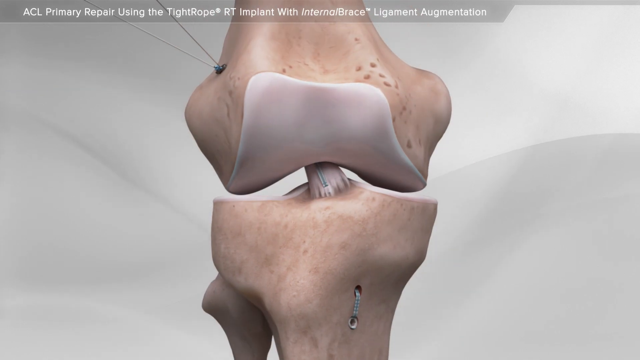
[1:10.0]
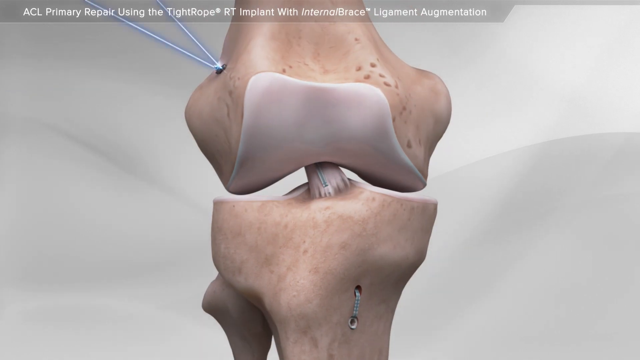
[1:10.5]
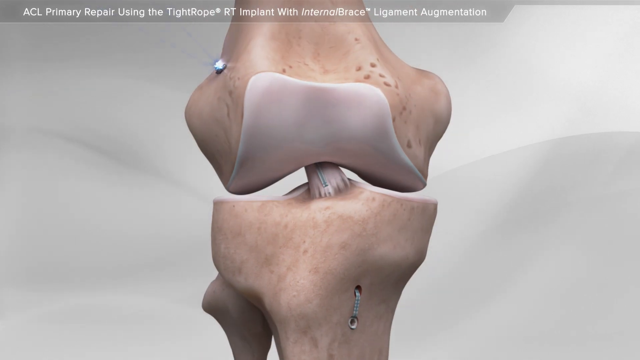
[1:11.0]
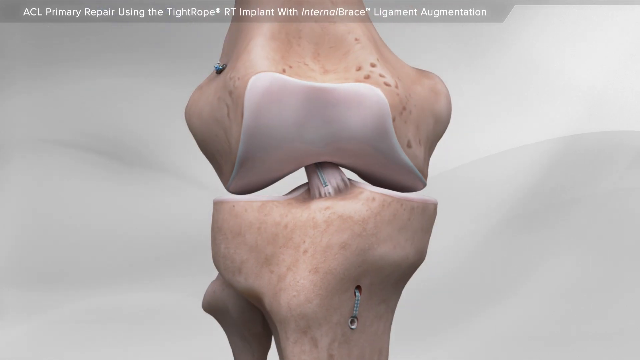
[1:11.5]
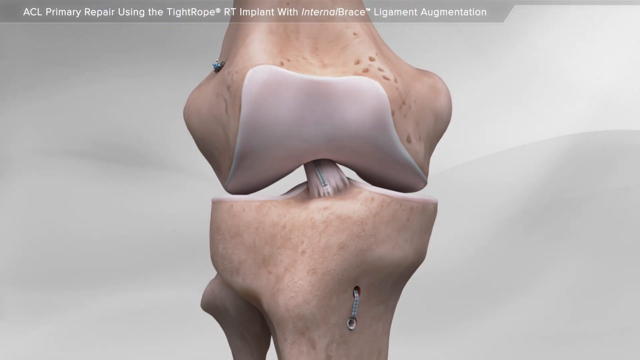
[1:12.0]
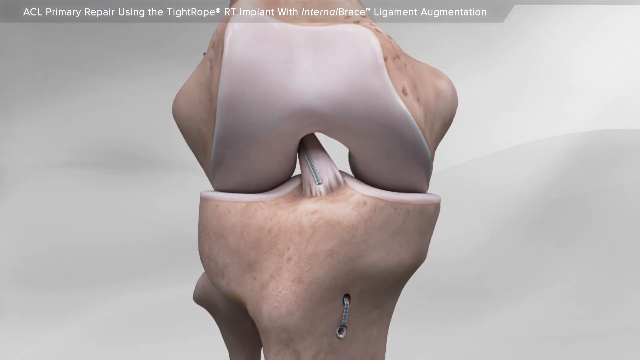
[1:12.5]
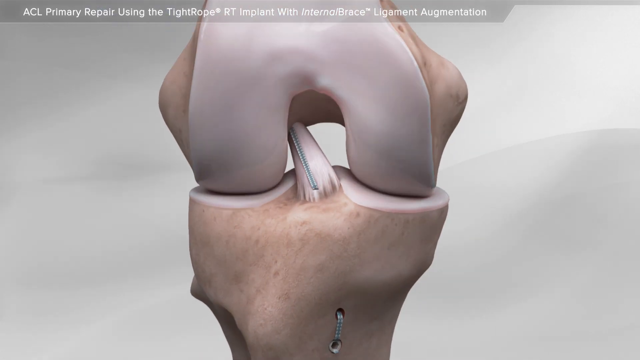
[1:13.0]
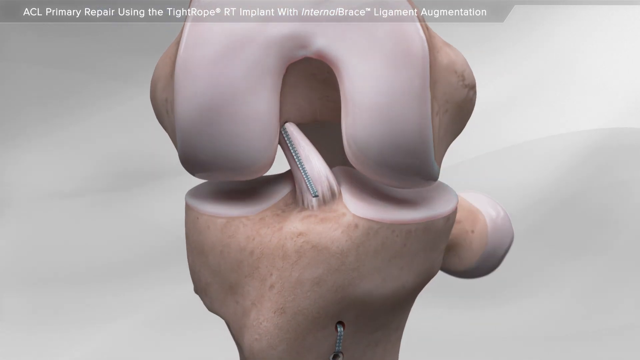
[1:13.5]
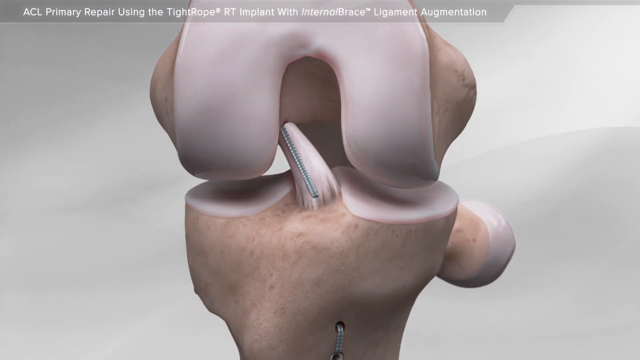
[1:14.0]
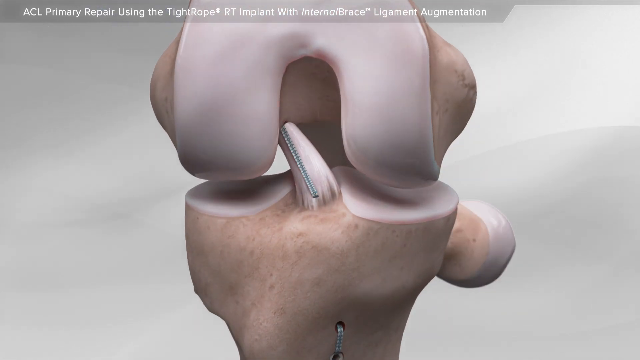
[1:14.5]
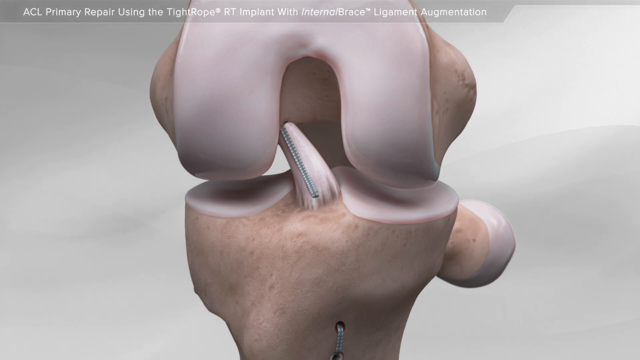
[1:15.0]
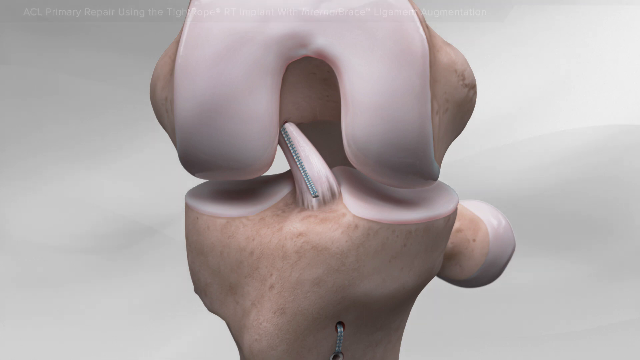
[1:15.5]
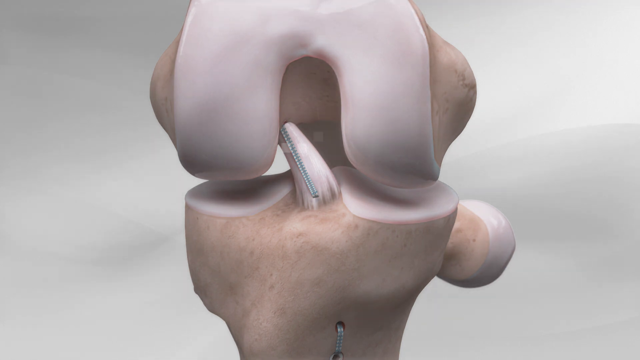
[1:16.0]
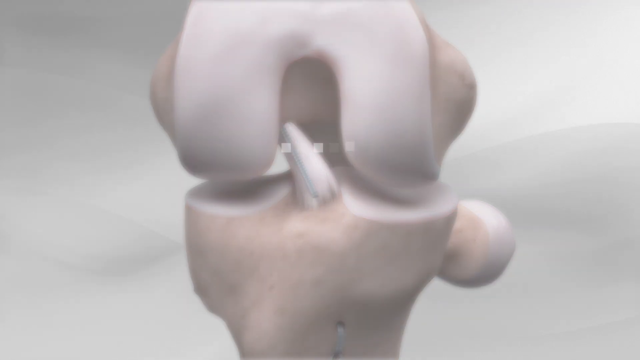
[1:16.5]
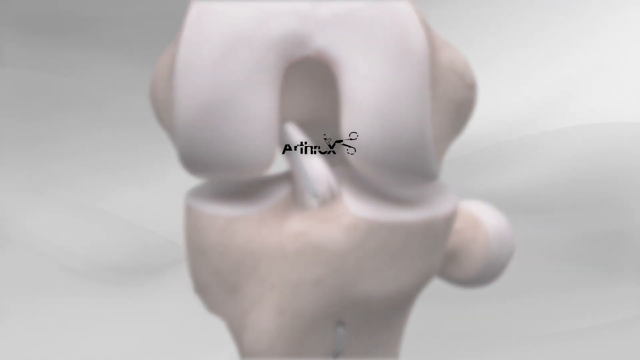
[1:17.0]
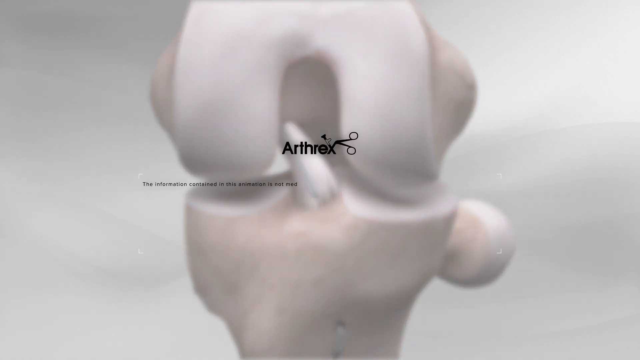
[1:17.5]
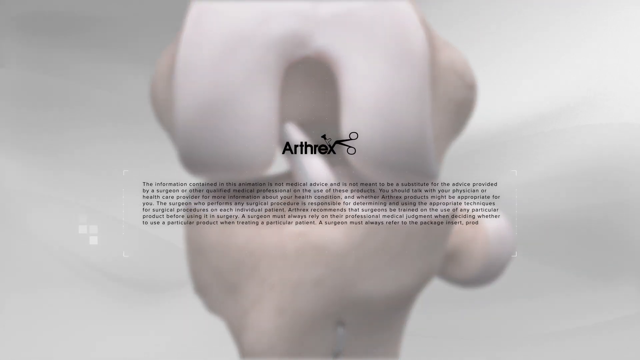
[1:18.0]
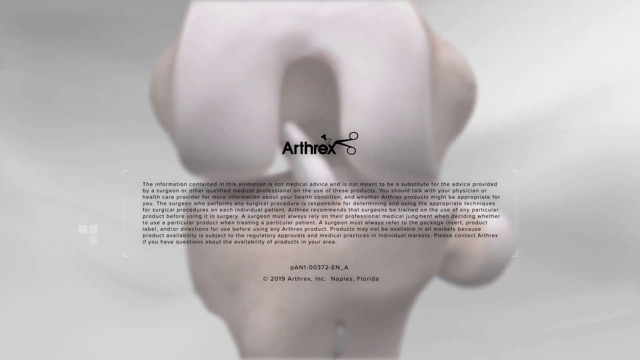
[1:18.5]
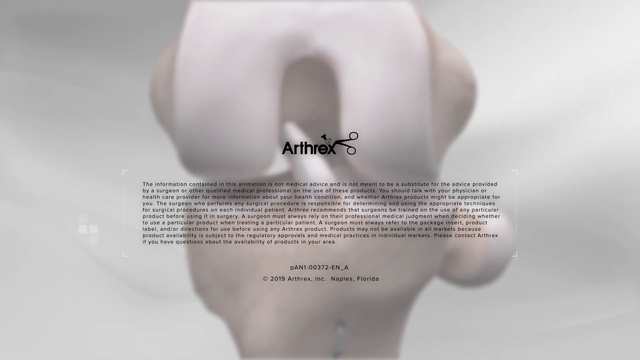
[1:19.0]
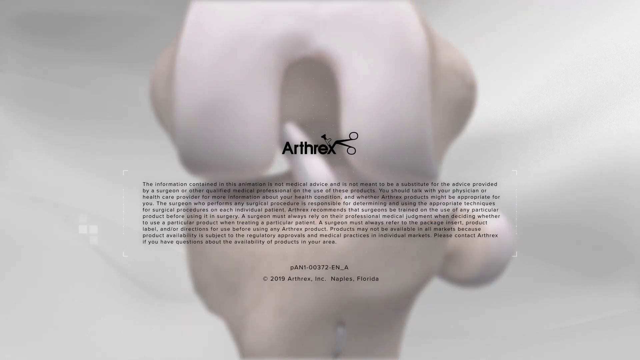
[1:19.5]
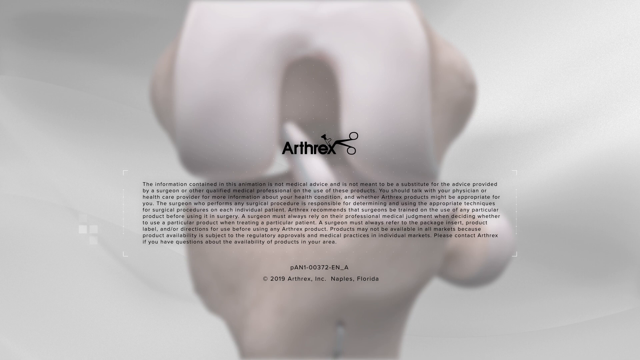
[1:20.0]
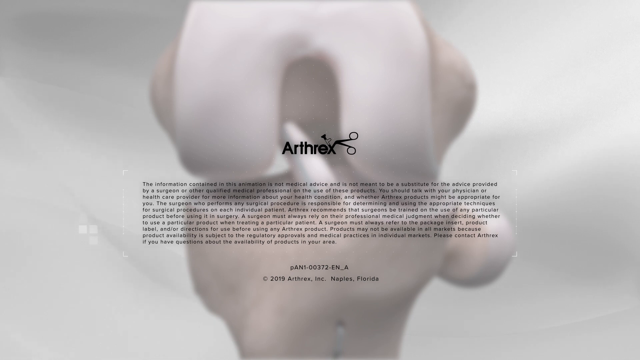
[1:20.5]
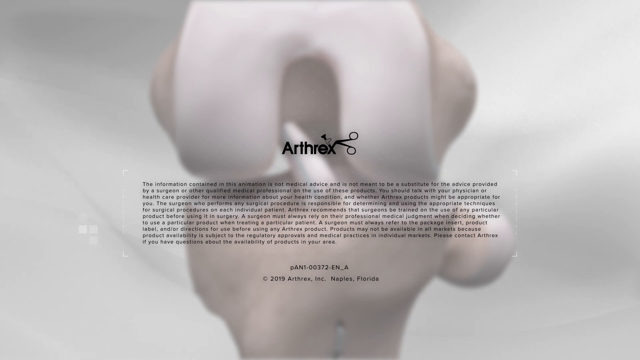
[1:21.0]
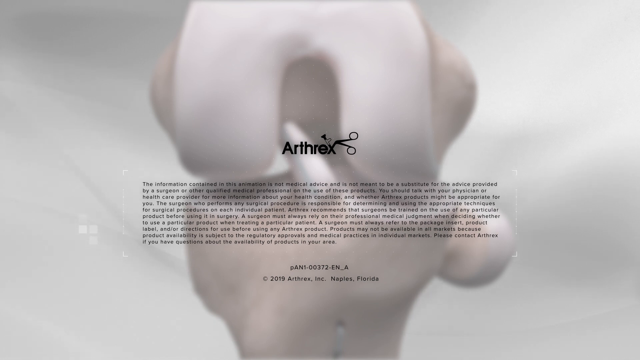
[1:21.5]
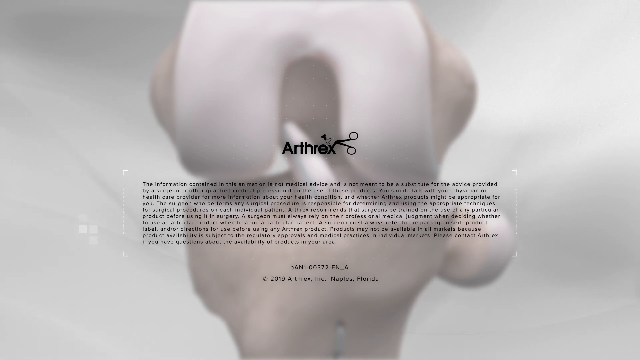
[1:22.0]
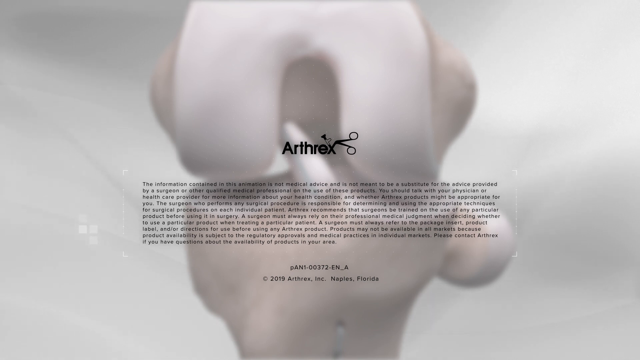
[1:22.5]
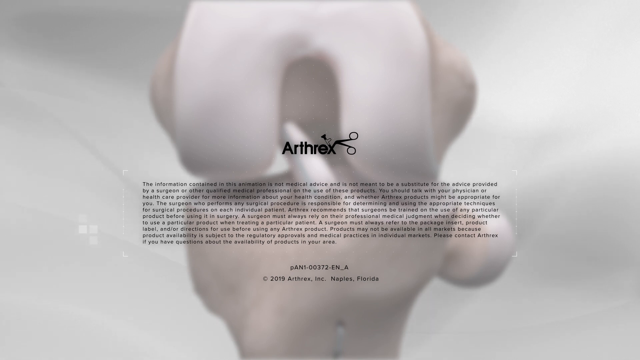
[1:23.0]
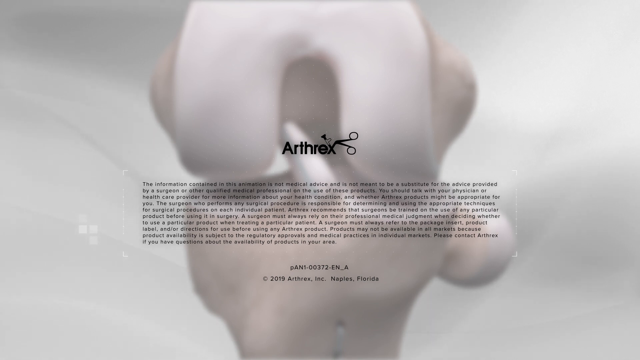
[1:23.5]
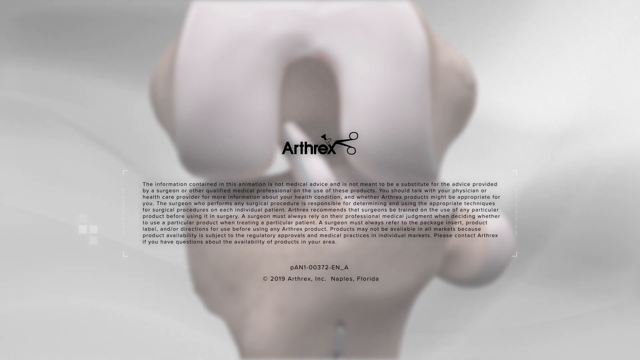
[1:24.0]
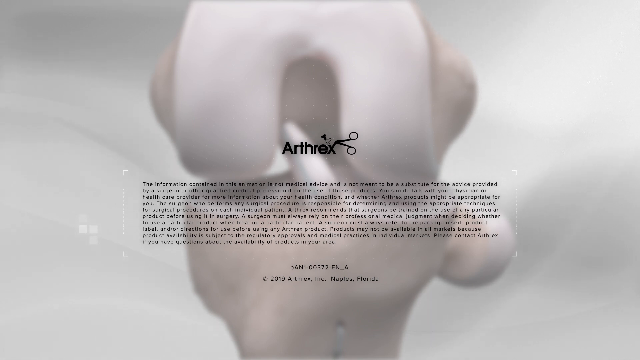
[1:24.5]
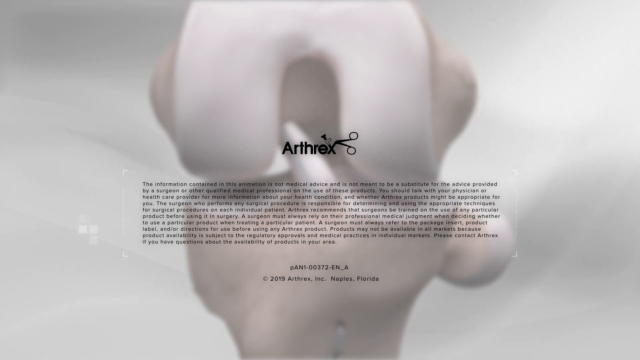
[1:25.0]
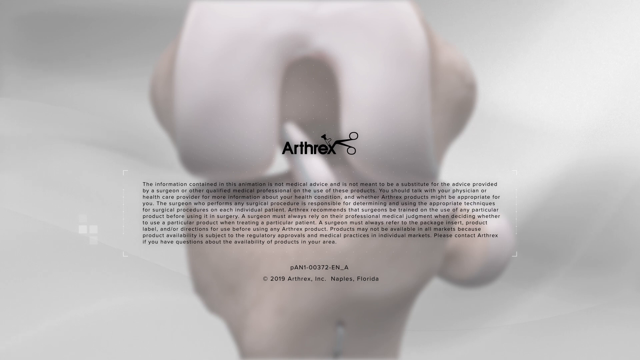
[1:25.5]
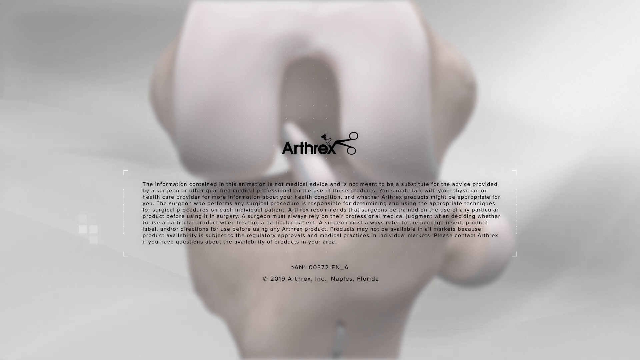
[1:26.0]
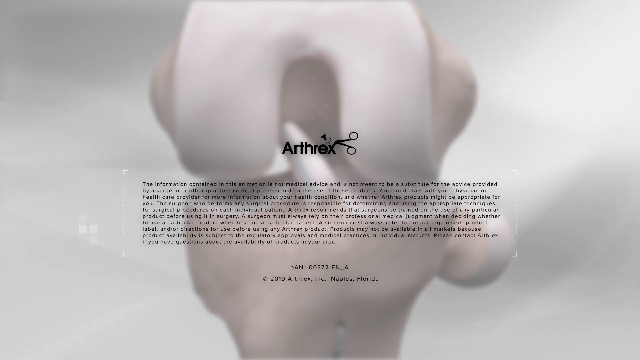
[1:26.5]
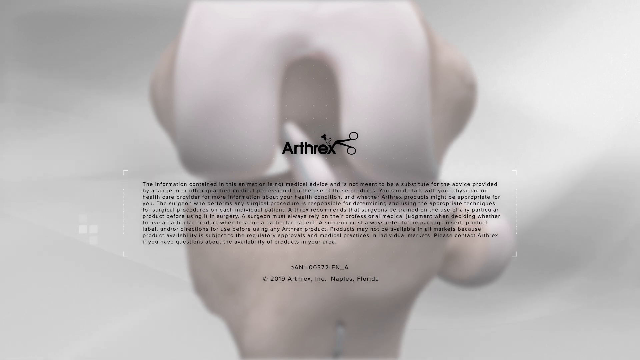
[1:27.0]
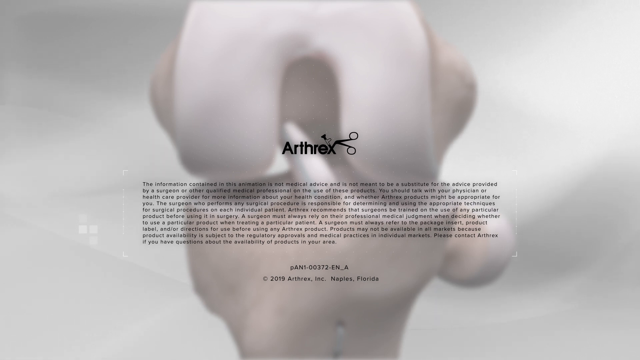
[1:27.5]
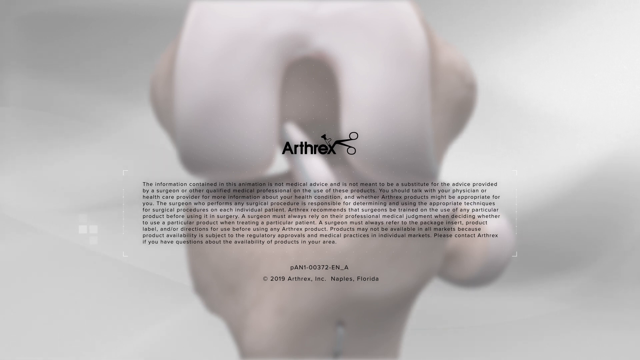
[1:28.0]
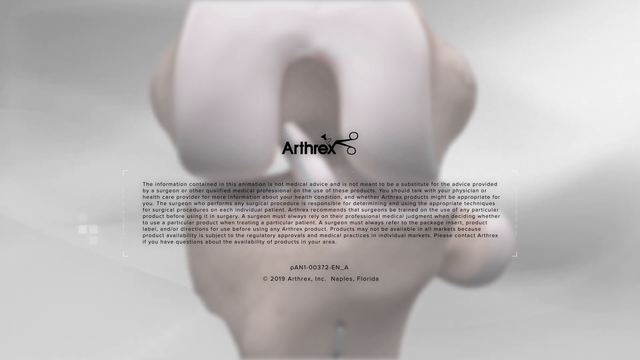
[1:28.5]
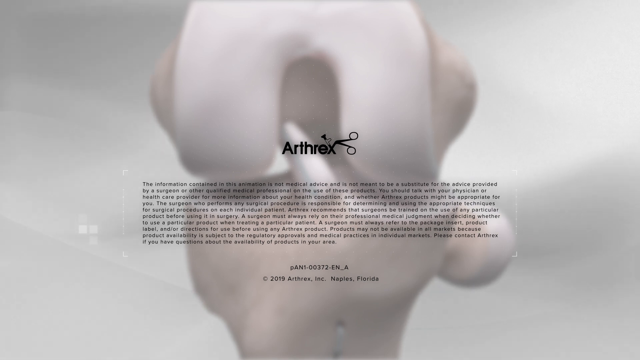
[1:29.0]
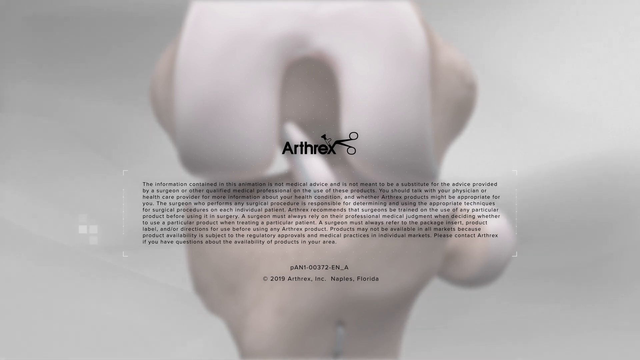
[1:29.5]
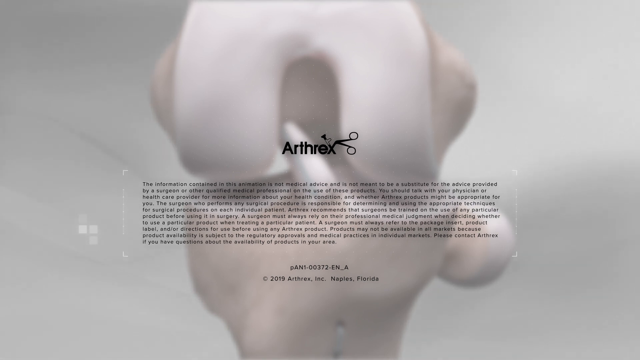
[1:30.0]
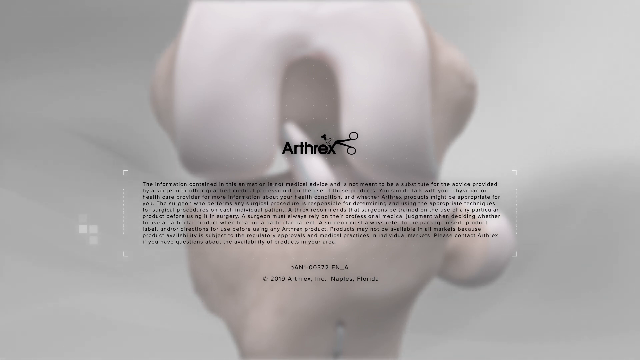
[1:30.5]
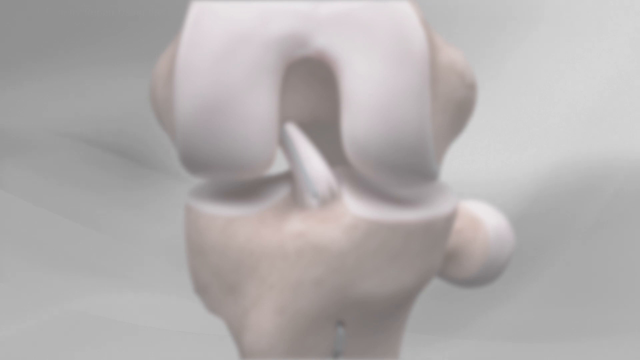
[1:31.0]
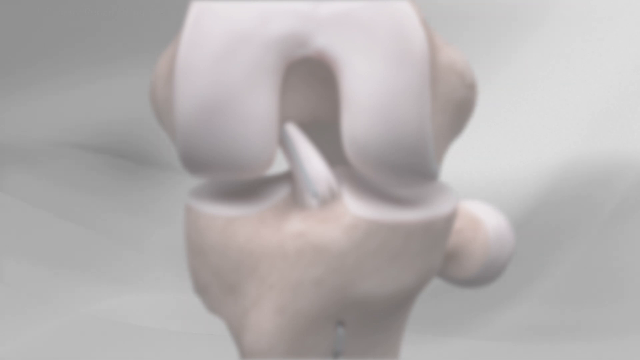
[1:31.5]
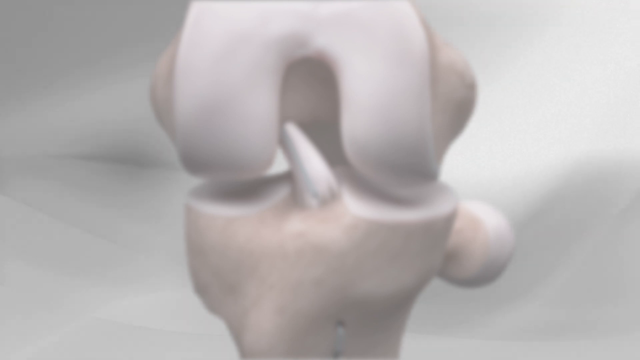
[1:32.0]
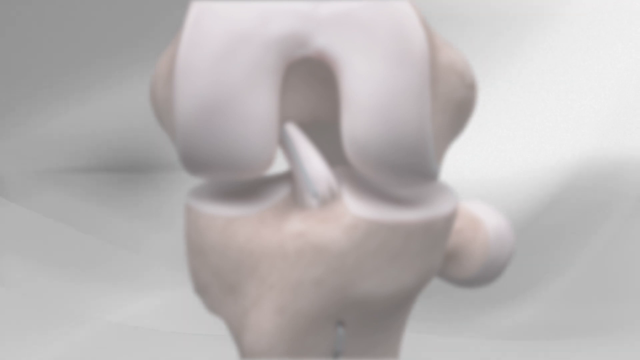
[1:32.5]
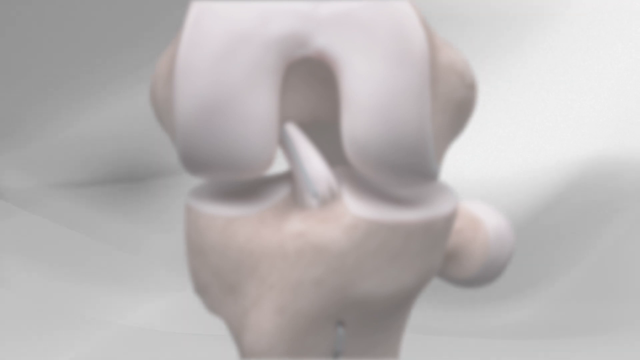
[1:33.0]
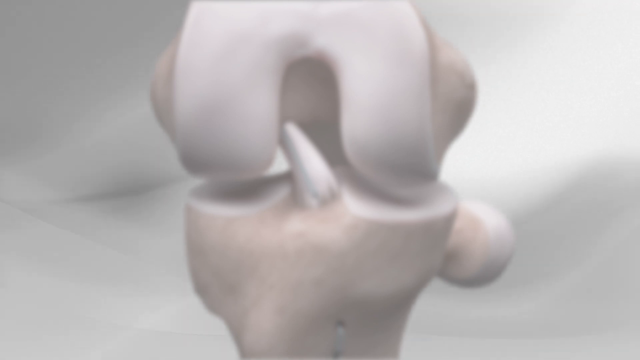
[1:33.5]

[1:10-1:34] What appears to be two connected bones are shown, with what looks like a small fragment between them, and text includes "implant with internal brace ligament augmentation." The screen then goes grayish and black writing pops up. Up top it reads "Arthrex," and where the X is there appear to be small black scissors. Additional very small writing appears below. At the bottom of the screen there is a set of letters and numbers and a copyright sign, with what appears to be the year 2019 and "Arthrex Inc.," and beside that "Naples, Florida" is written at the very bottom. The screen stays light gray as the writing goes down, and the bones remain visible in the background.